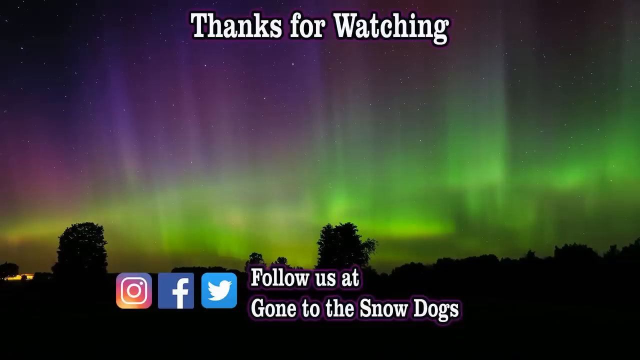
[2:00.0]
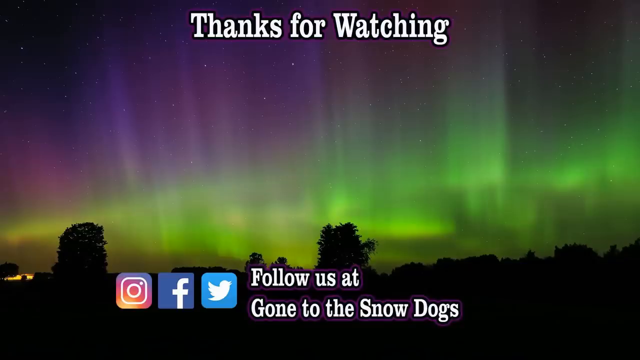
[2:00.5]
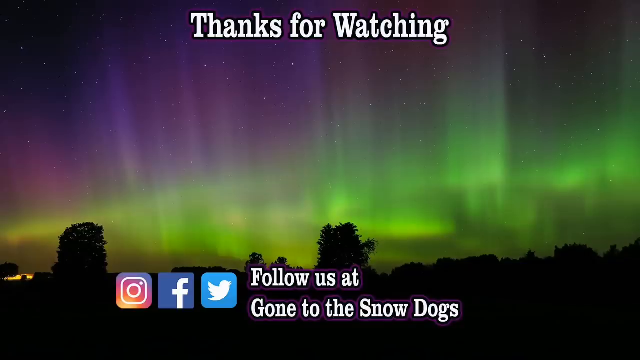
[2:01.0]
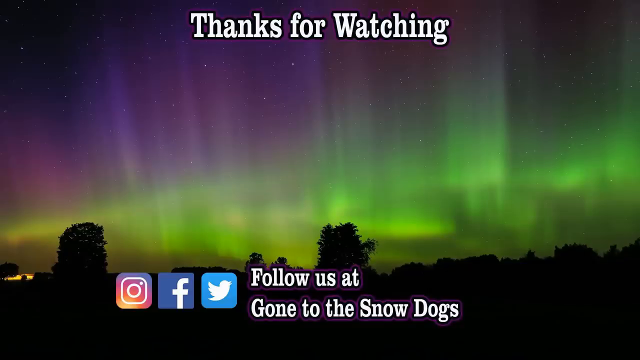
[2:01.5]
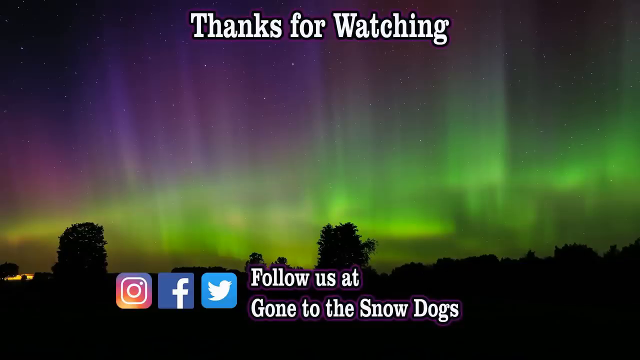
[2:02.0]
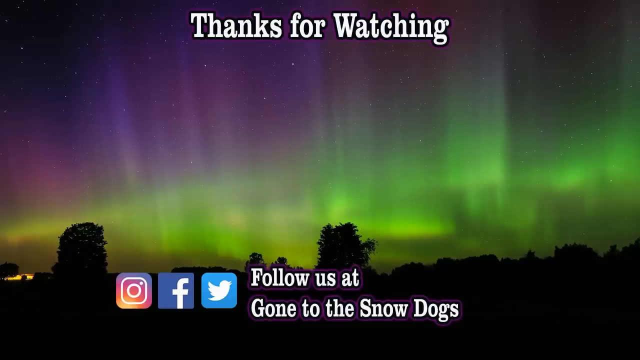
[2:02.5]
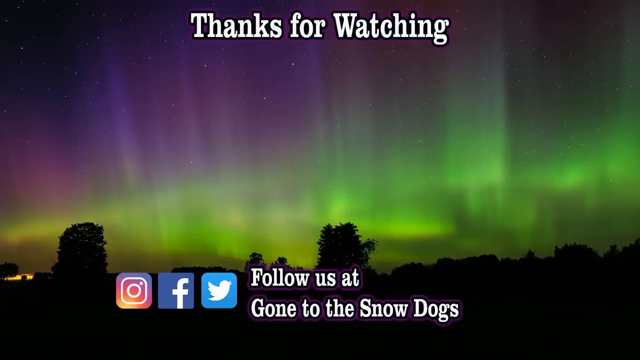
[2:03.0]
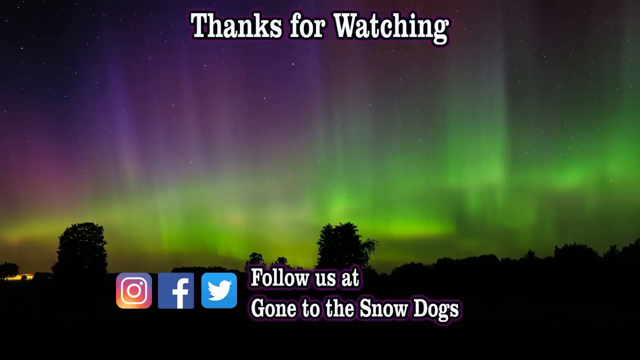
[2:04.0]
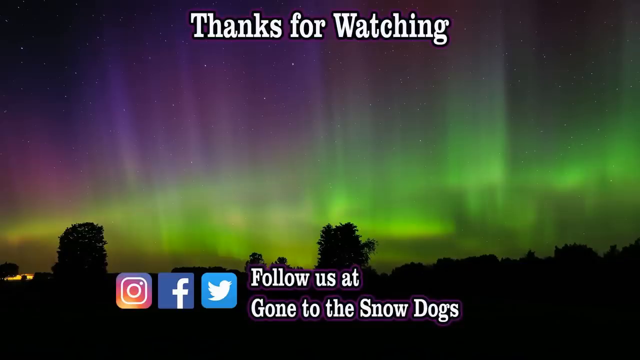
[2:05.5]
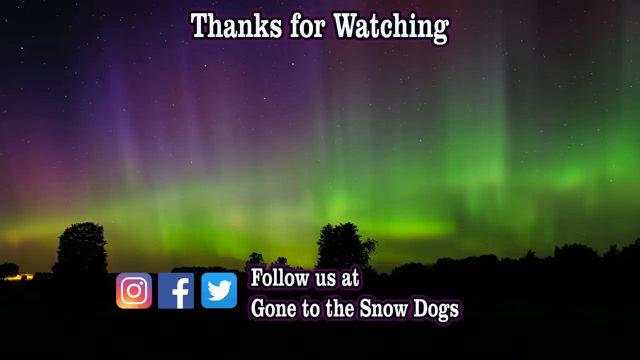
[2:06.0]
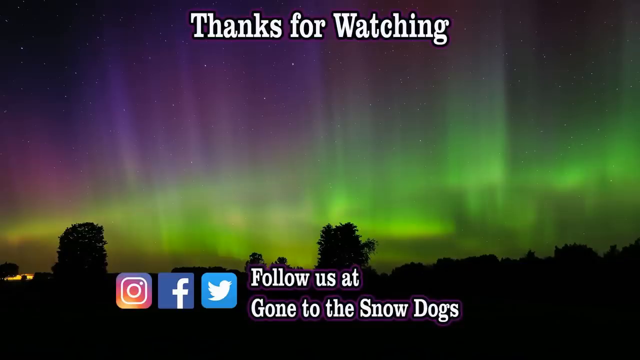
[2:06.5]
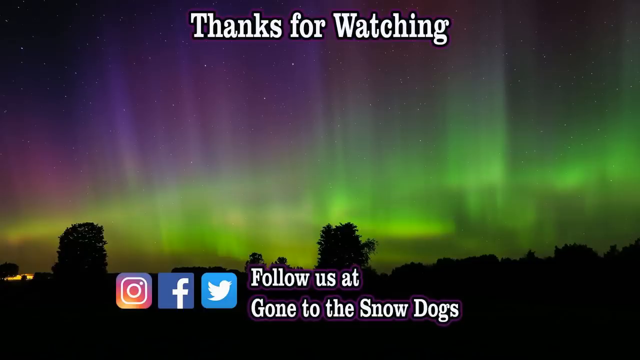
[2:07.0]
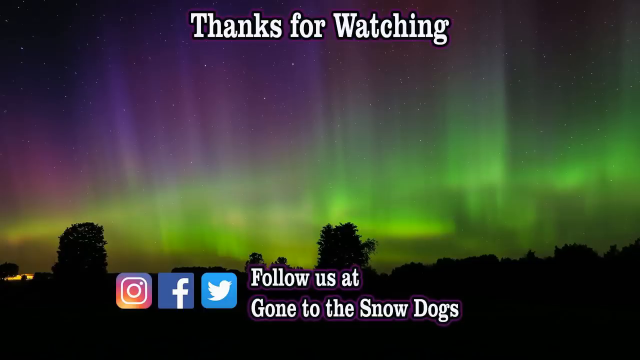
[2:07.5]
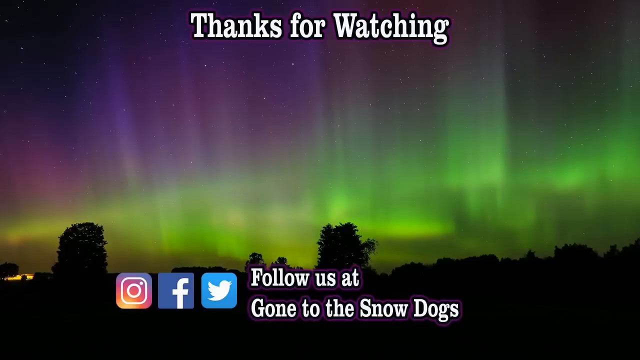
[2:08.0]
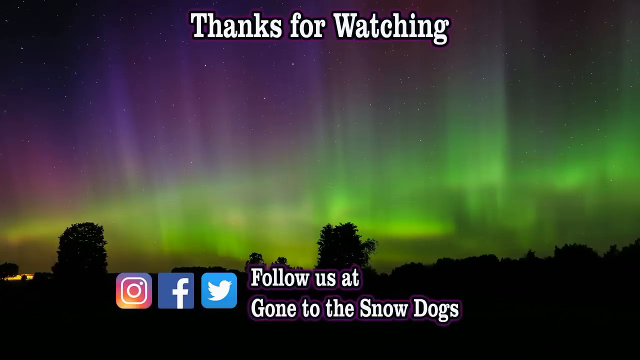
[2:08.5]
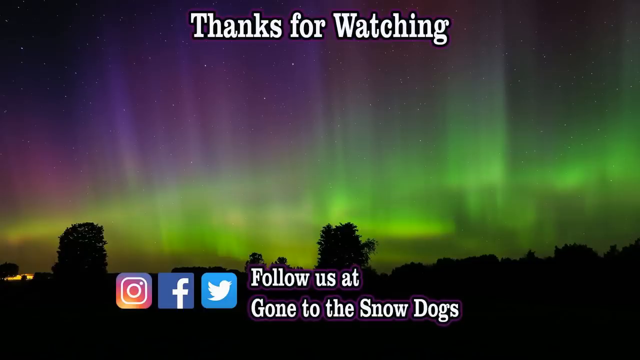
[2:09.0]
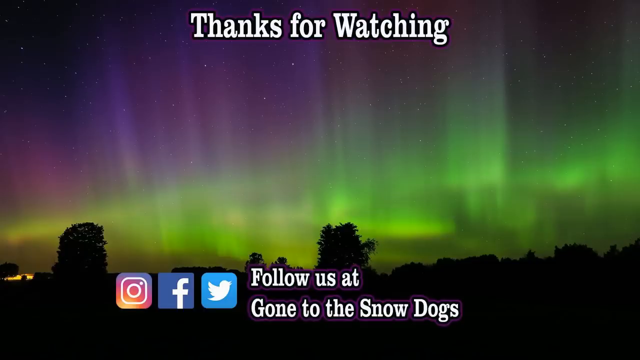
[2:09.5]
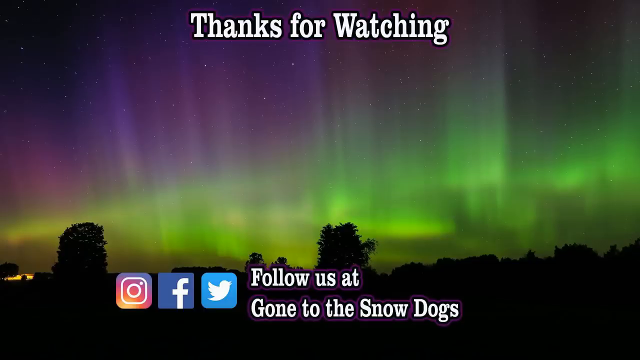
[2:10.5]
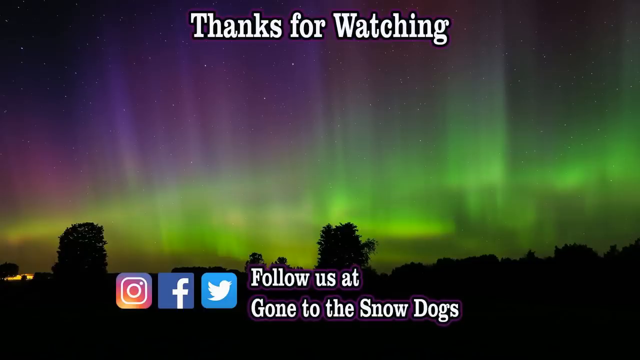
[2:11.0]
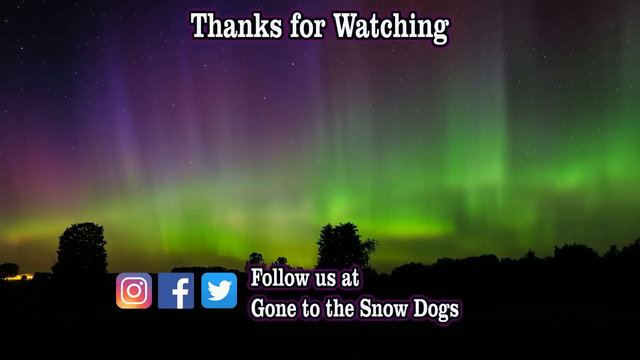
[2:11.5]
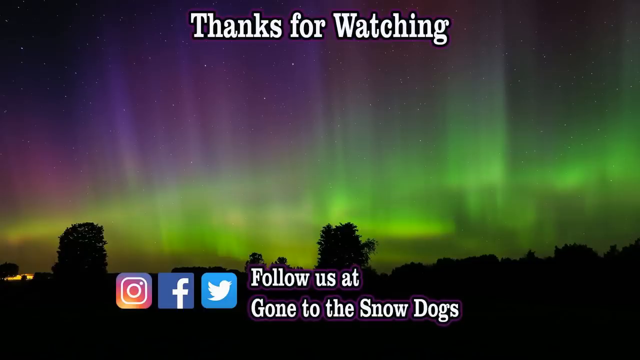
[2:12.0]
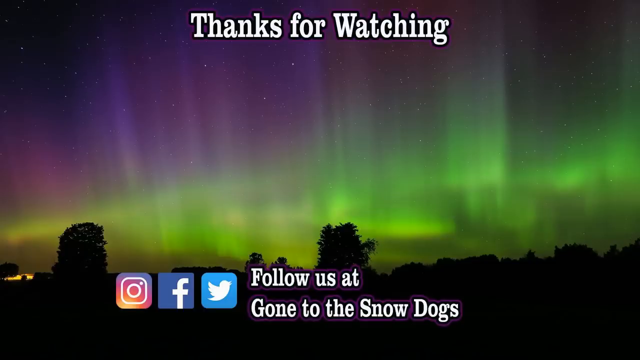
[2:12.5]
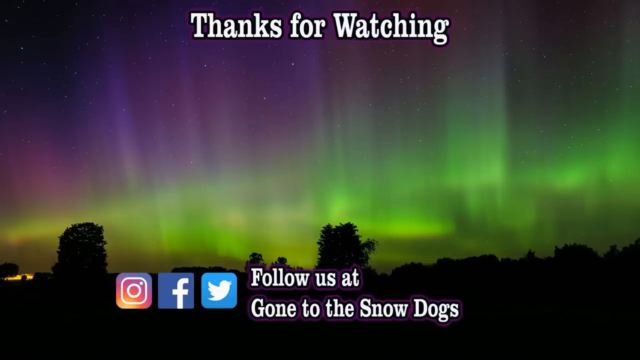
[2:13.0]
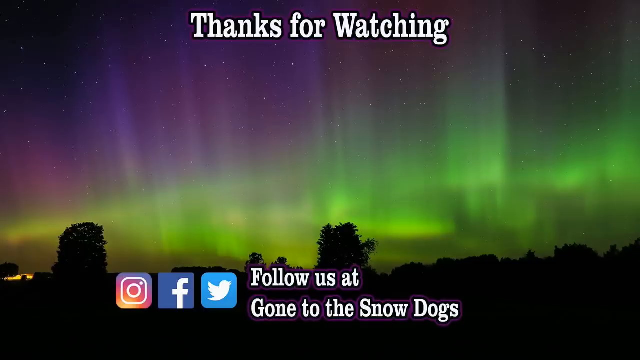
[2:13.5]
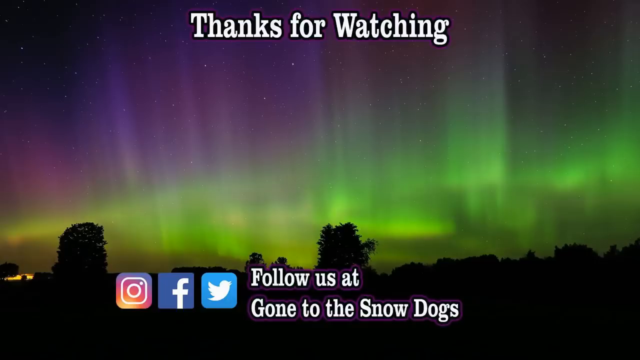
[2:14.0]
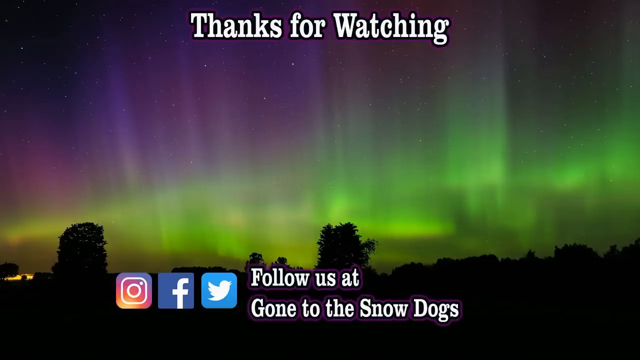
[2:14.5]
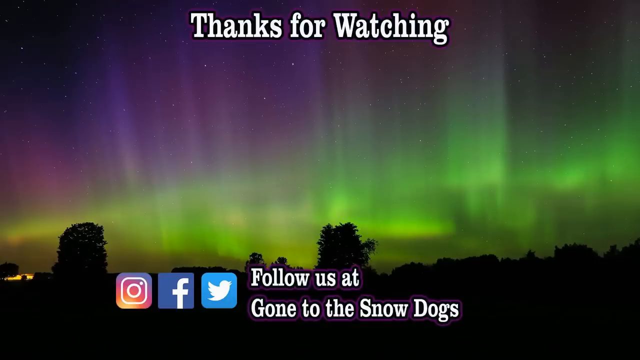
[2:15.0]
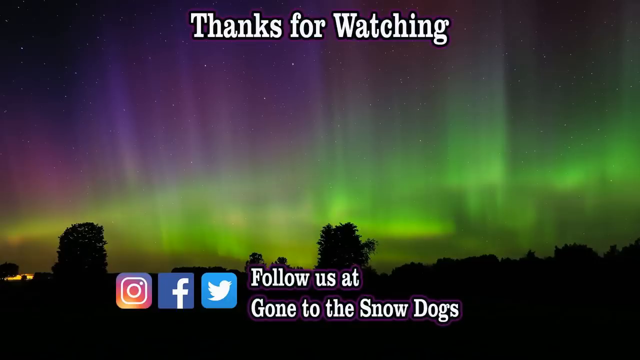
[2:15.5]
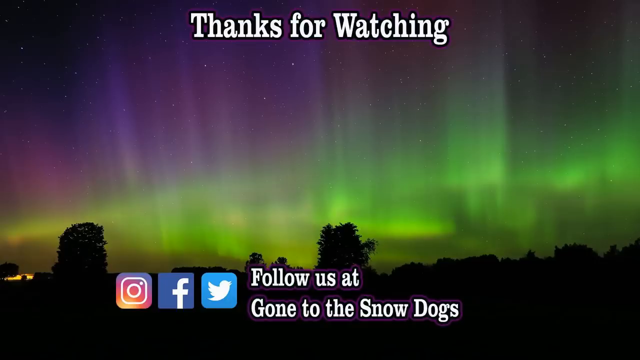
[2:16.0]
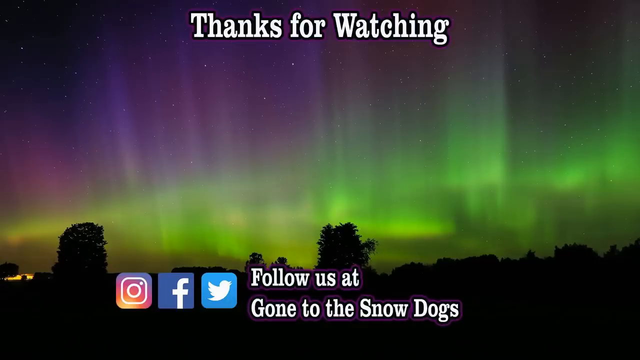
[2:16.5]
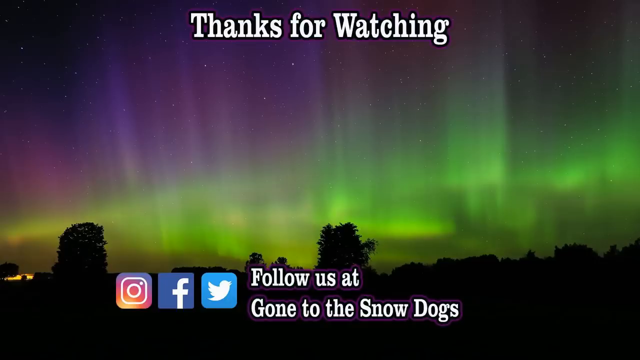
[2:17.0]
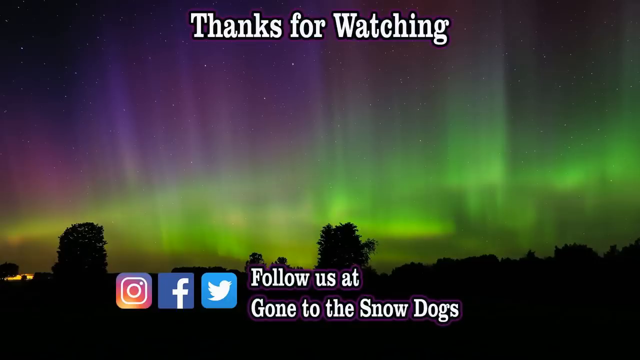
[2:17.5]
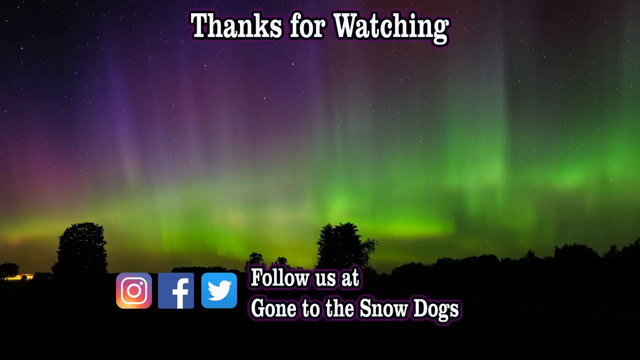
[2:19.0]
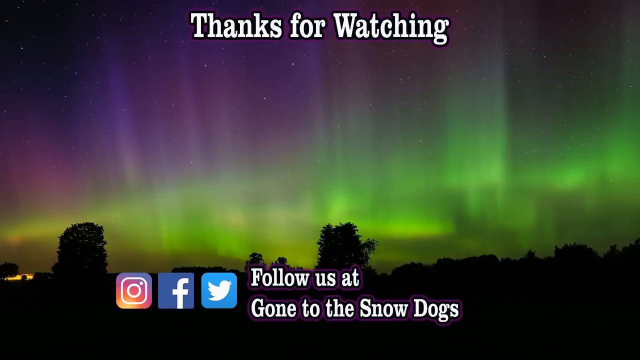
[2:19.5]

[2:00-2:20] What appears to be a nighttime scene shows an aurora in the sky with very bright purple and green colors. In front of it, a subtitle at the top of the screen says "thanks for watching," and one at the bottom says "follow us at Gone to the Snow Dogs," with Instagram, Facebook and Twitter icons next to it. On top of that are a few images: one of a hoodie sweatshirt with a dog icon on it, and another of one of the dogs looking at the camera. The screen promotes these pages and the dogs' merchandise.